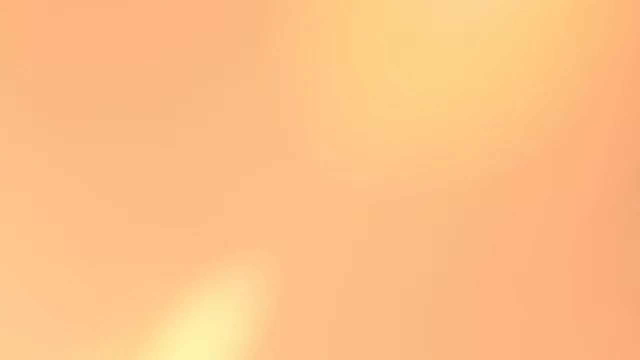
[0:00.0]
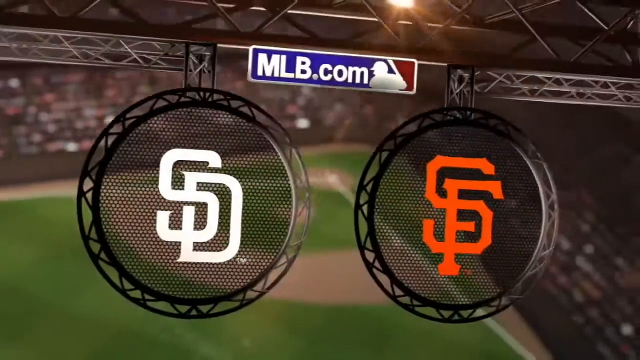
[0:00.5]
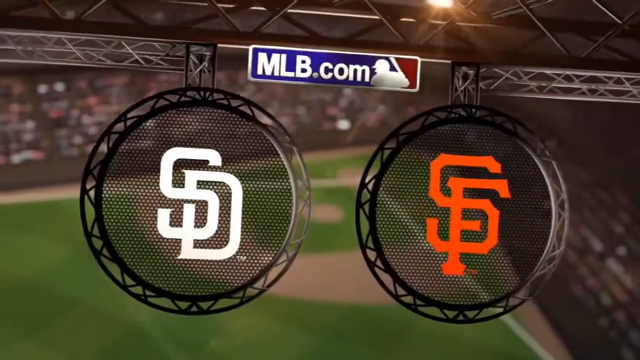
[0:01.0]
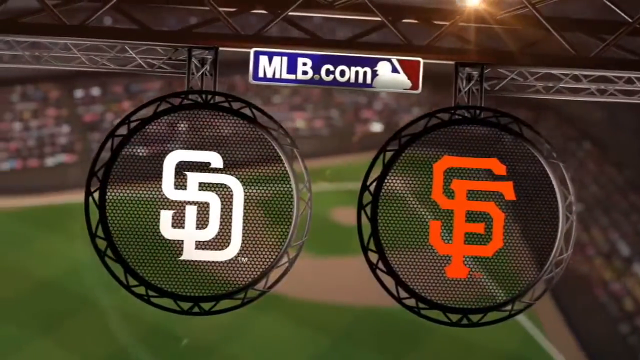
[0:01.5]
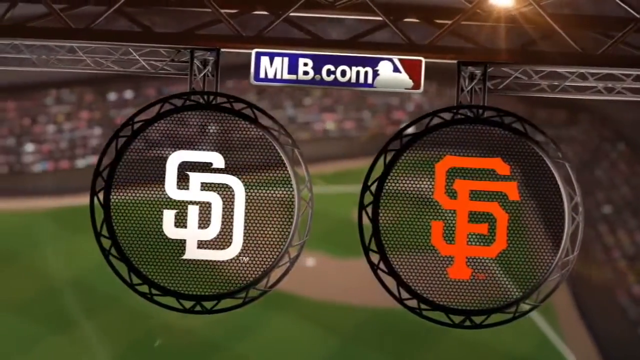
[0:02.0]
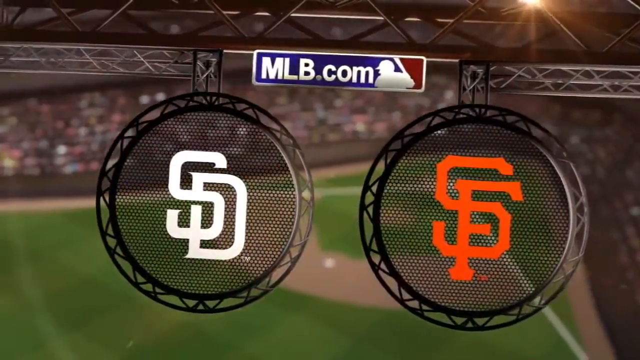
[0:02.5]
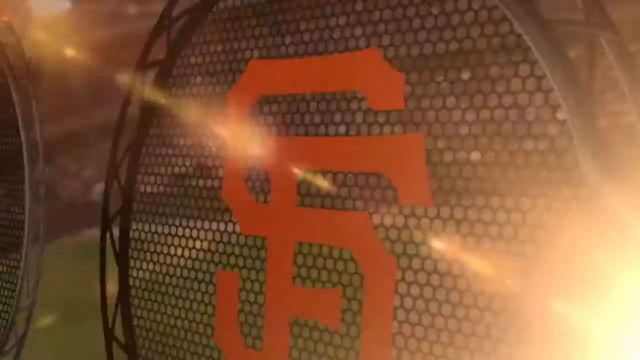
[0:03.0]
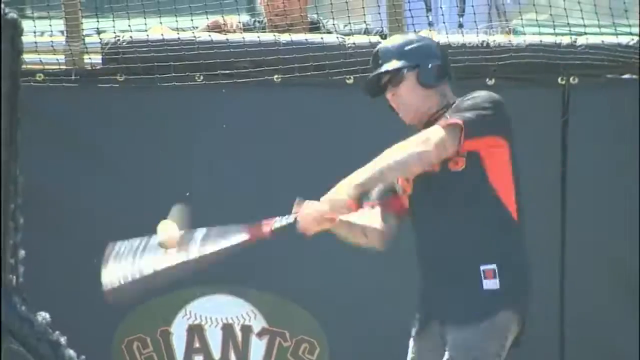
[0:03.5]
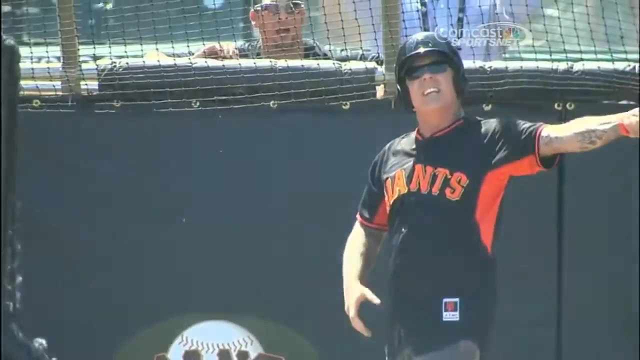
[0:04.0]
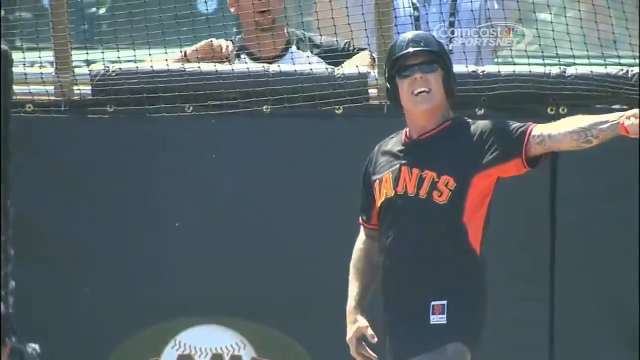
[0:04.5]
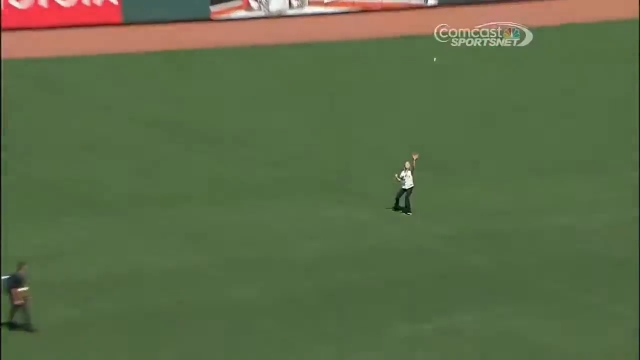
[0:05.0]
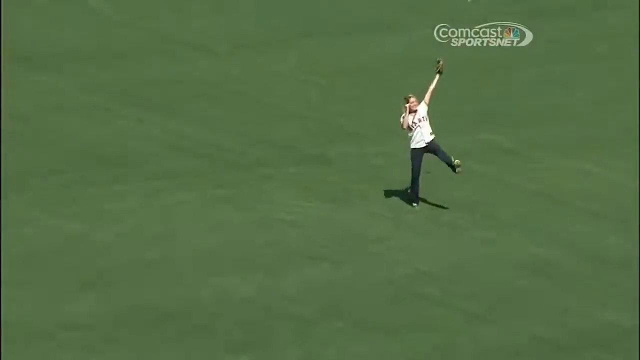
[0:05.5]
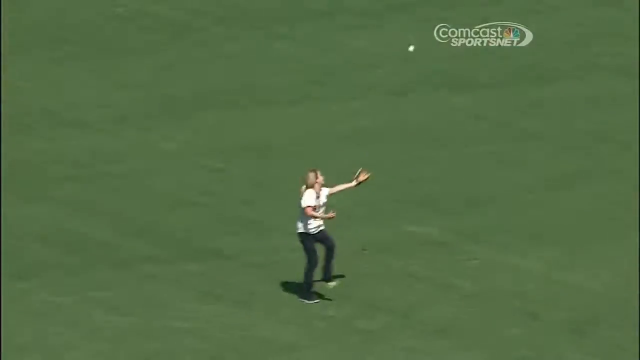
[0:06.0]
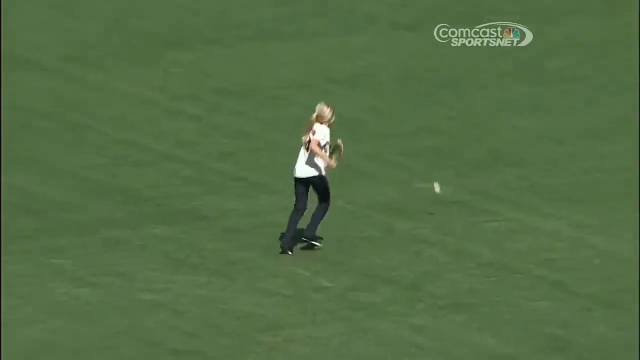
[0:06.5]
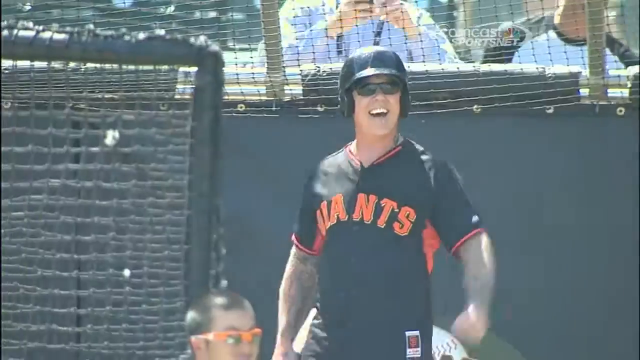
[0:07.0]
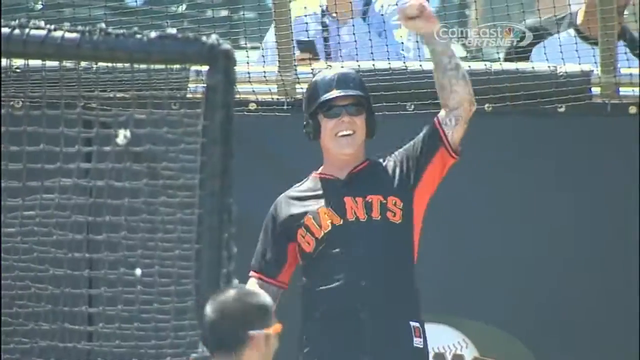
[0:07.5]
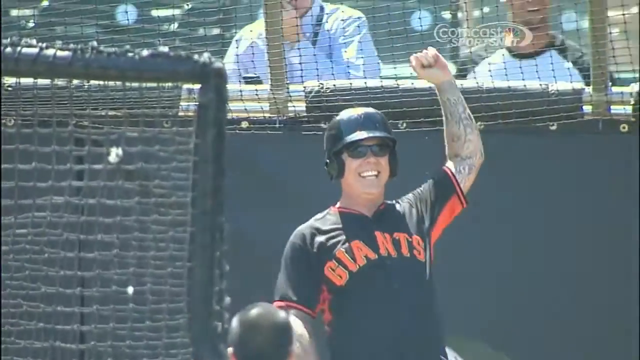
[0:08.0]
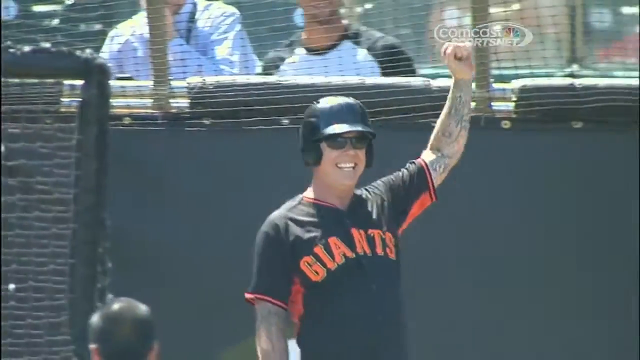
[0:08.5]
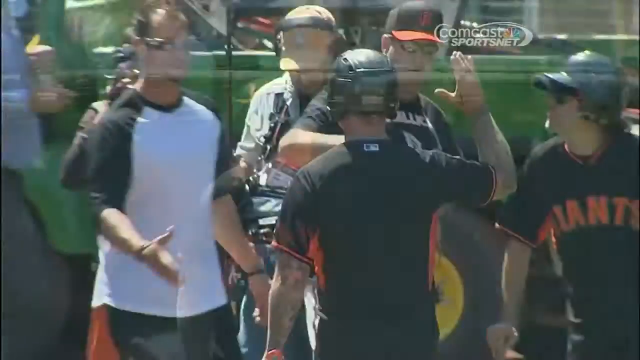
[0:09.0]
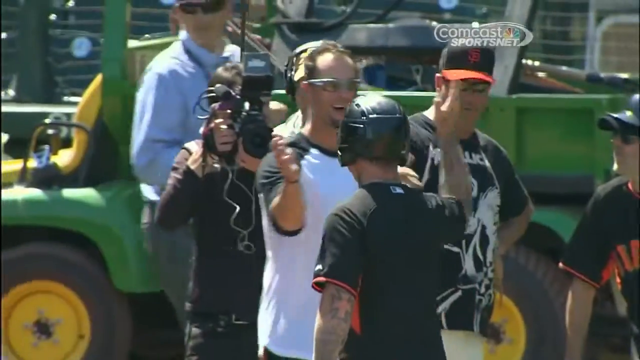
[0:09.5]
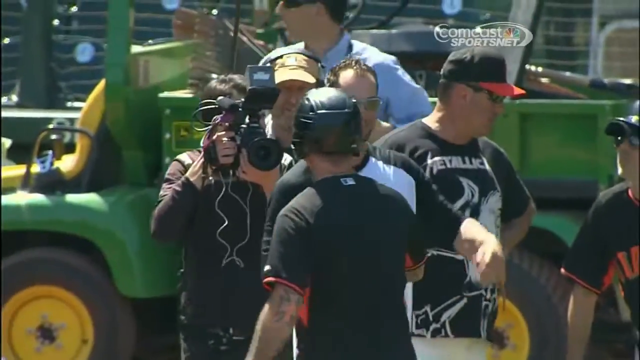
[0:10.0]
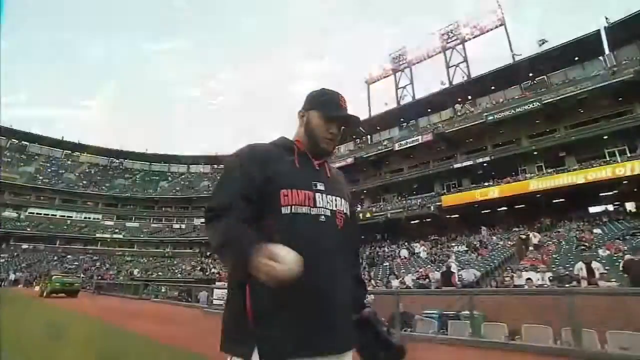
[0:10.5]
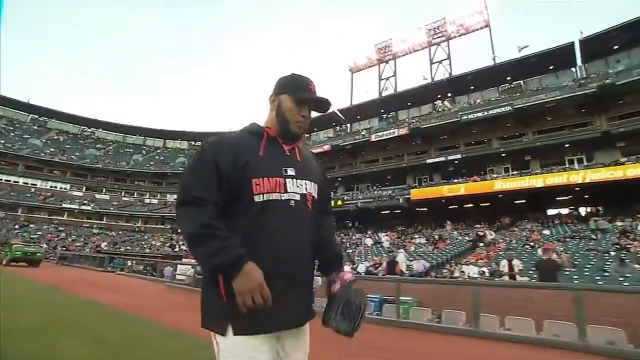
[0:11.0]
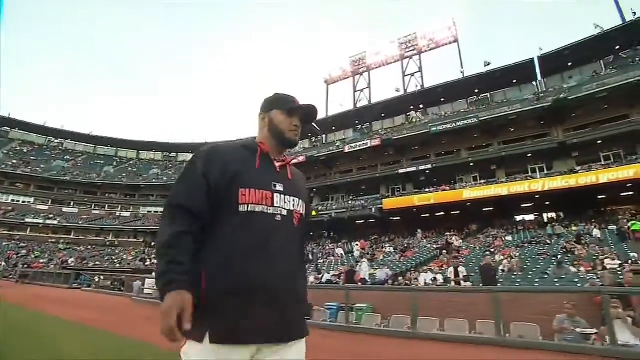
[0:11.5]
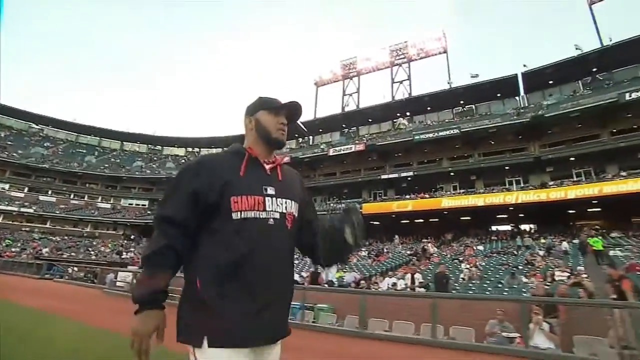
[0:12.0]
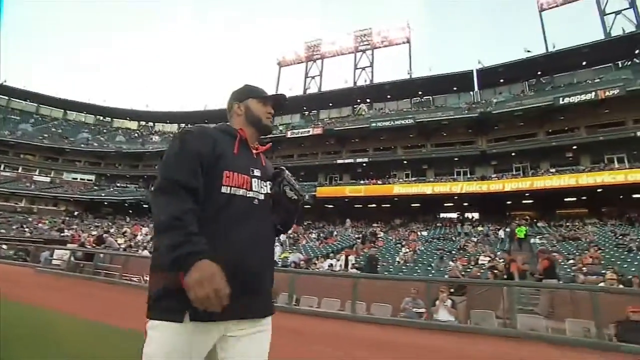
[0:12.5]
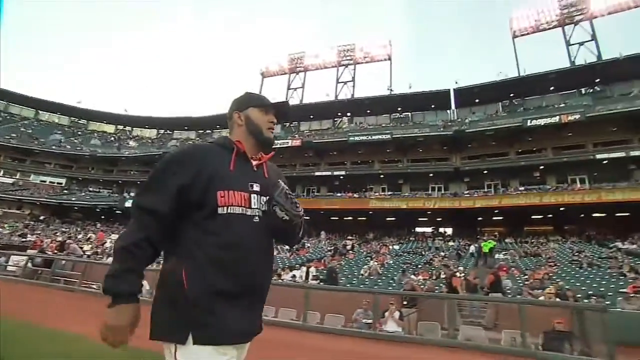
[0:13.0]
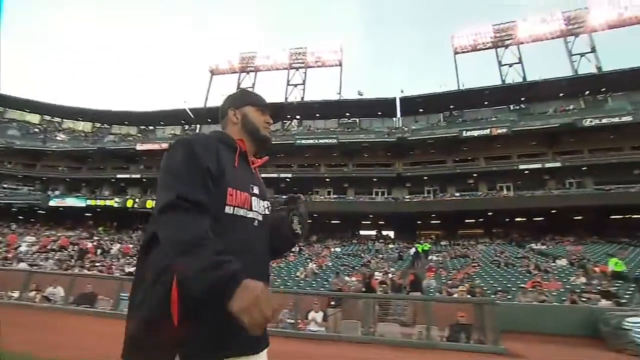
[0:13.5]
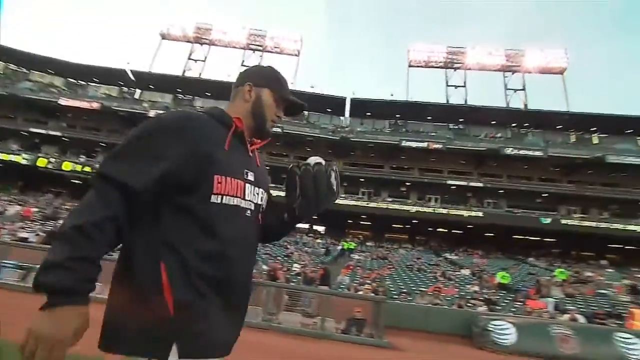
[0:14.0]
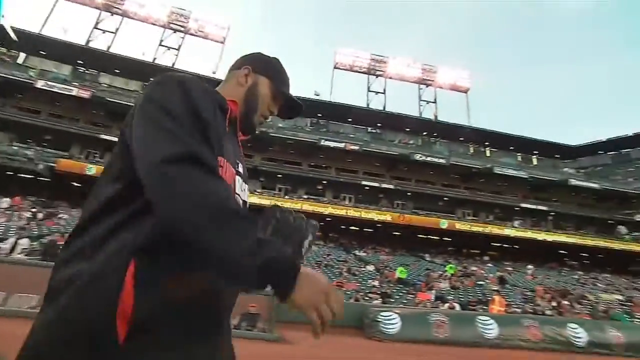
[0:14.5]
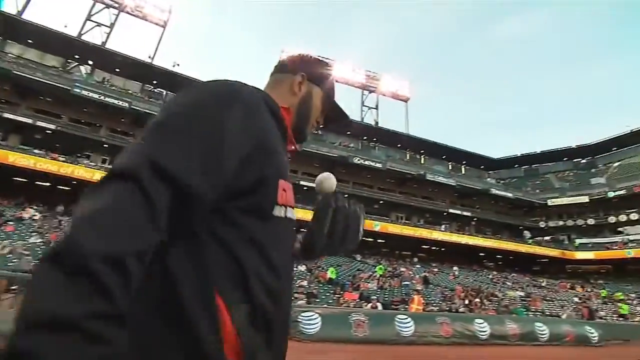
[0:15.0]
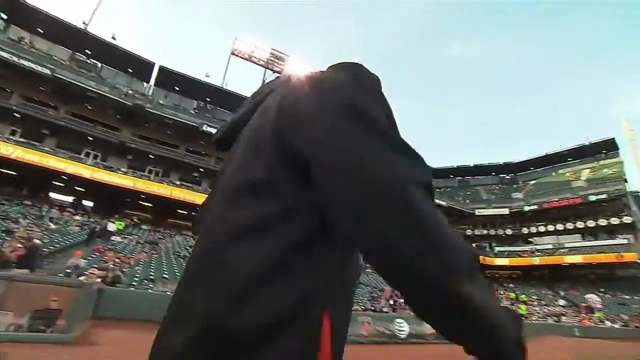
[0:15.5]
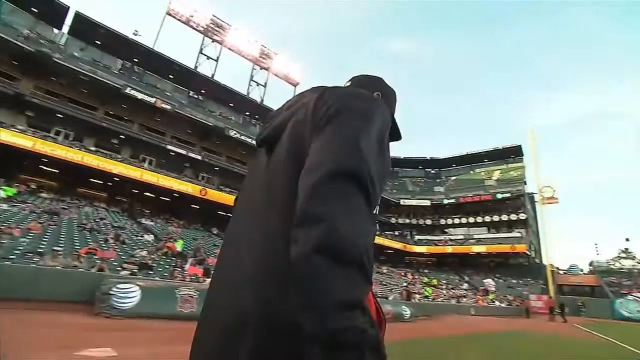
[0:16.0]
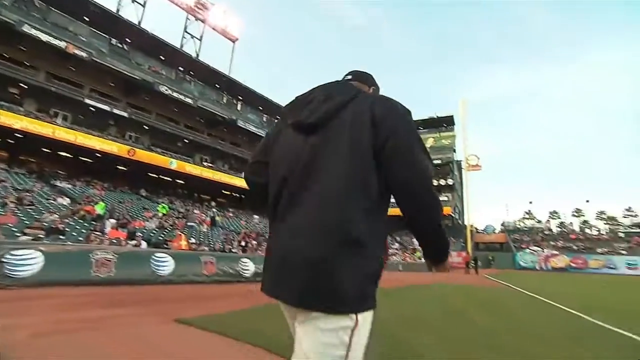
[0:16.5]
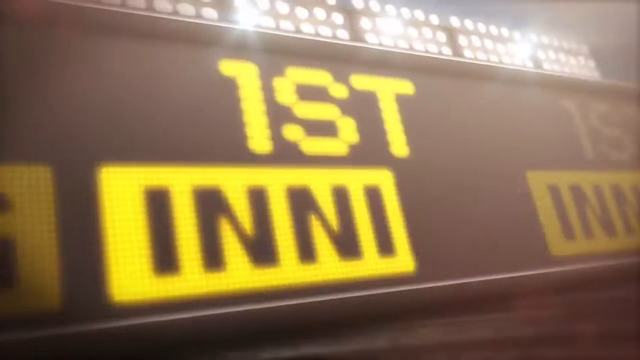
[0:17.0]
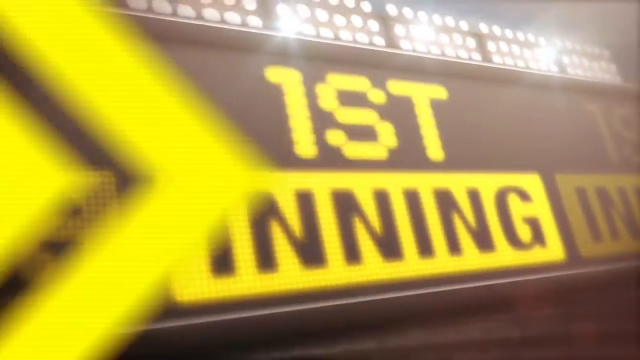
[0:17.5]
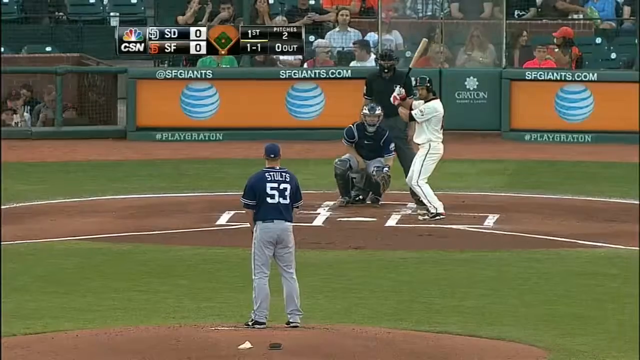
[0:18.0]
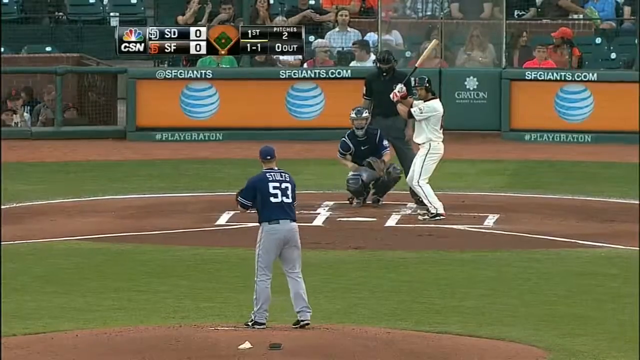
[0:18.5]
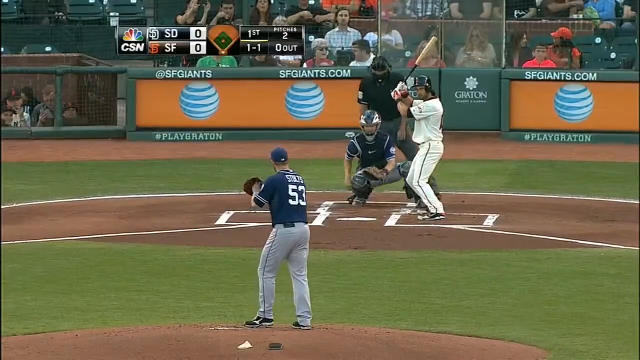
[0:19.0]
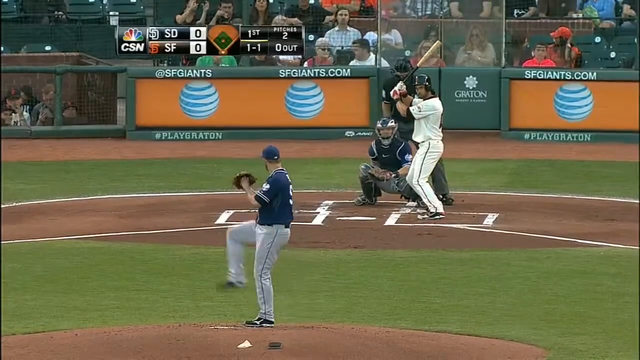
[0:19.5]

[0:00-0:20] The video opens with MLB.com and the MLB emblem, introducing a game between the San Diego Padres and the San Francisco Giants. Warm-ups are underway: an unidentified Giants player, with no name visible on him, practices batting. A Comcast Sportsnet watermark appears at the front. Other players come into the stadium, which is beginning to fill up. In the first inning, number 53 is pitching for the San Diego Padres; there are no outs, the count is 1-1, and the score is 0-0.